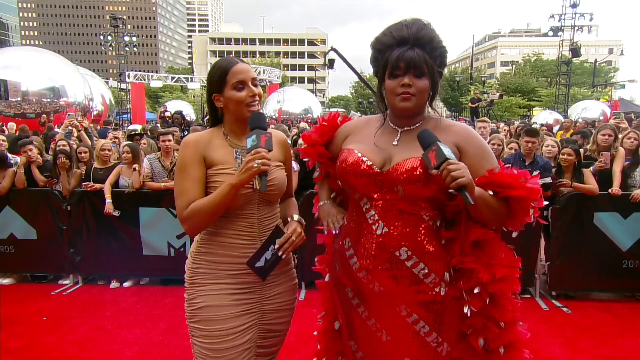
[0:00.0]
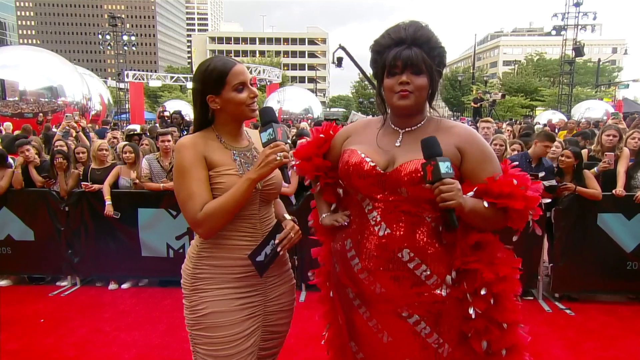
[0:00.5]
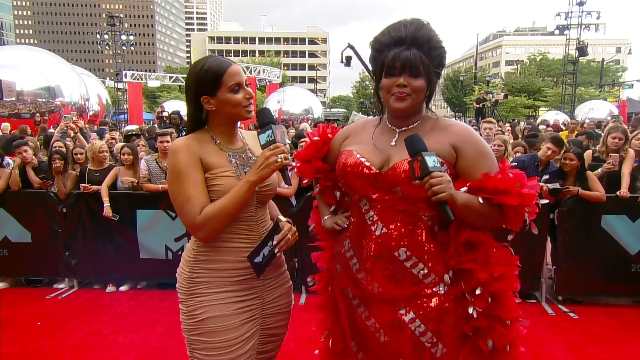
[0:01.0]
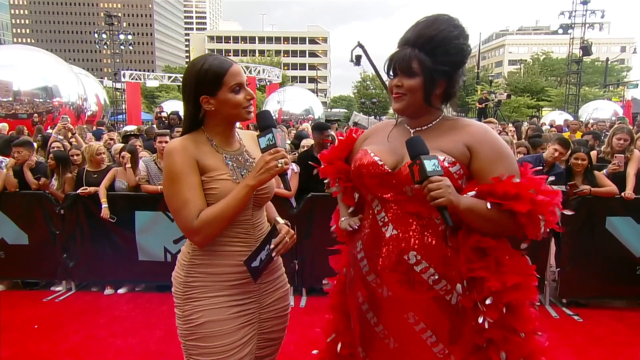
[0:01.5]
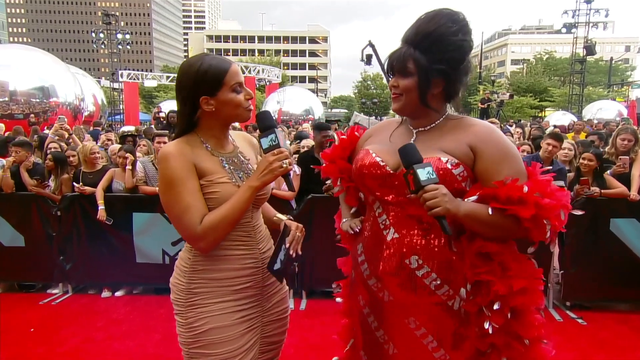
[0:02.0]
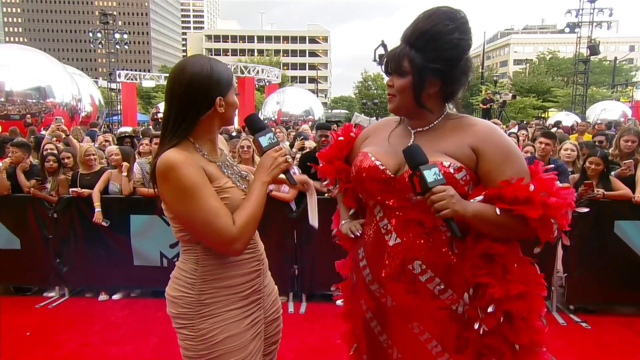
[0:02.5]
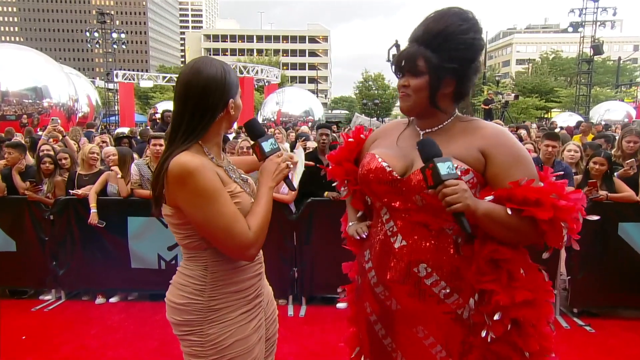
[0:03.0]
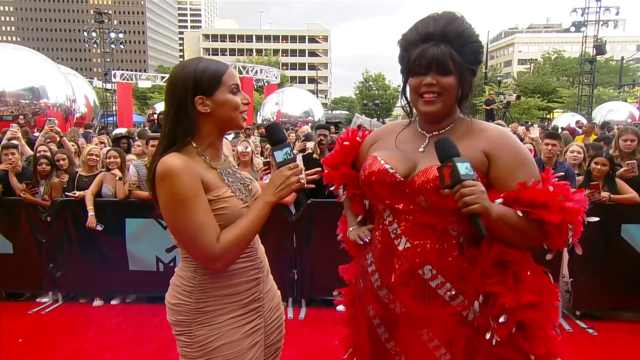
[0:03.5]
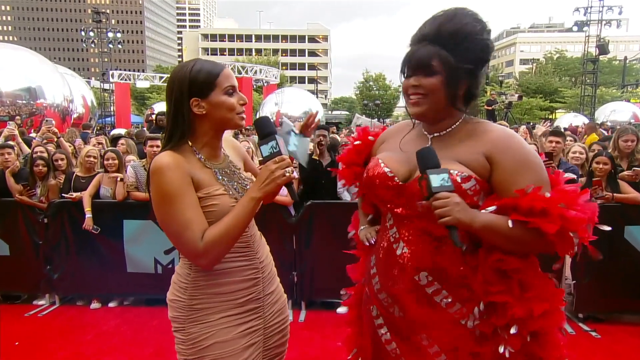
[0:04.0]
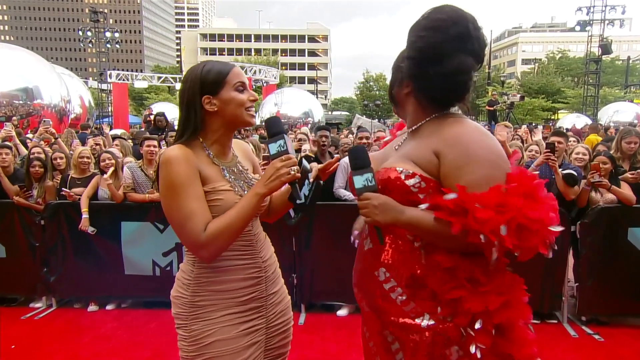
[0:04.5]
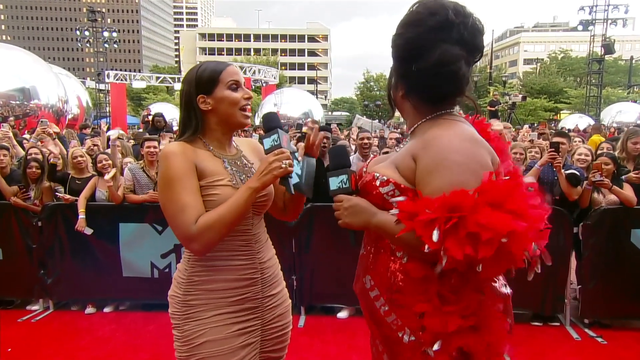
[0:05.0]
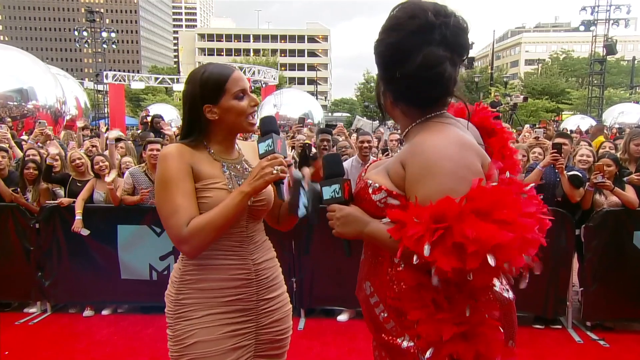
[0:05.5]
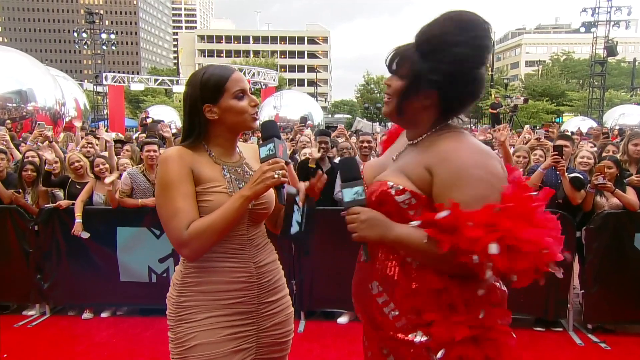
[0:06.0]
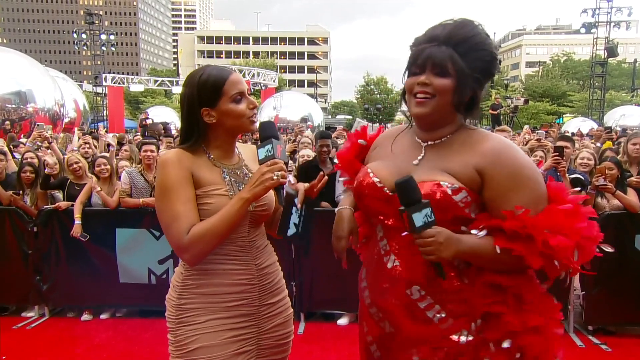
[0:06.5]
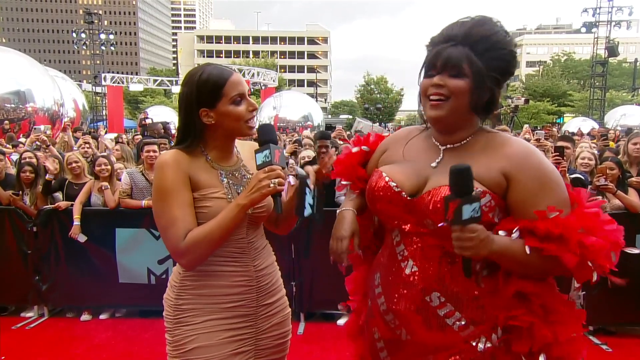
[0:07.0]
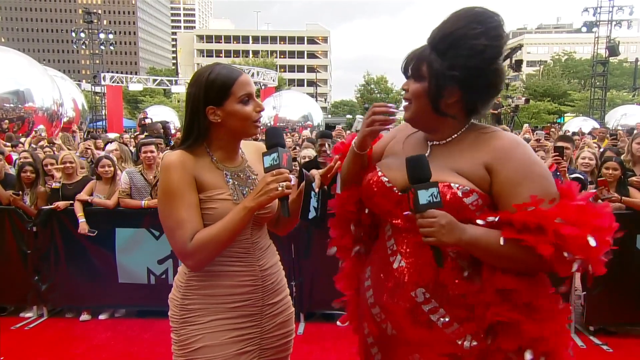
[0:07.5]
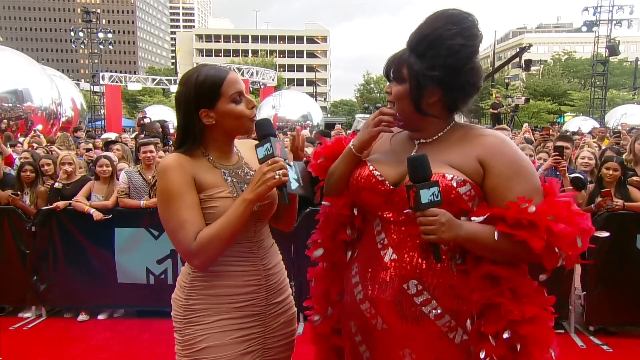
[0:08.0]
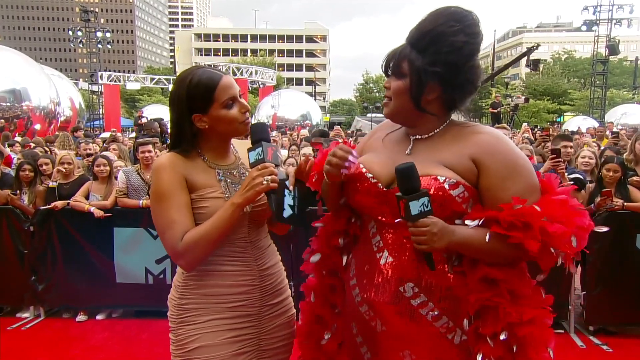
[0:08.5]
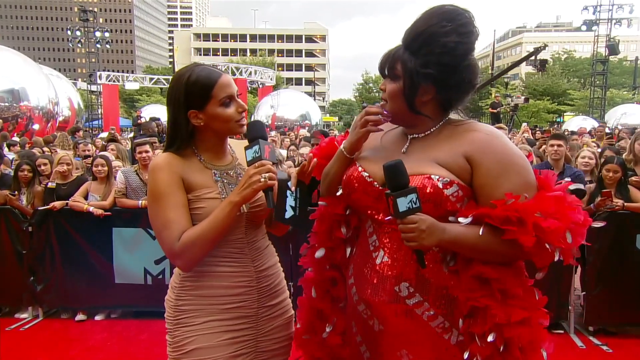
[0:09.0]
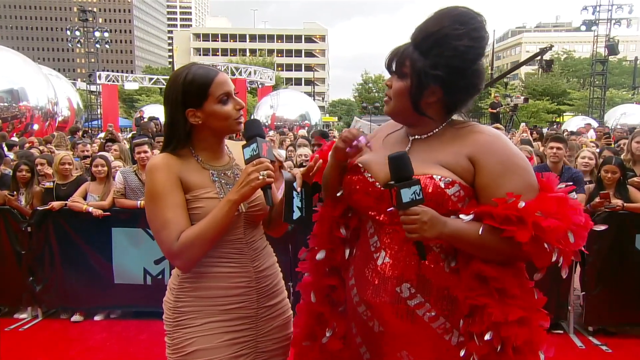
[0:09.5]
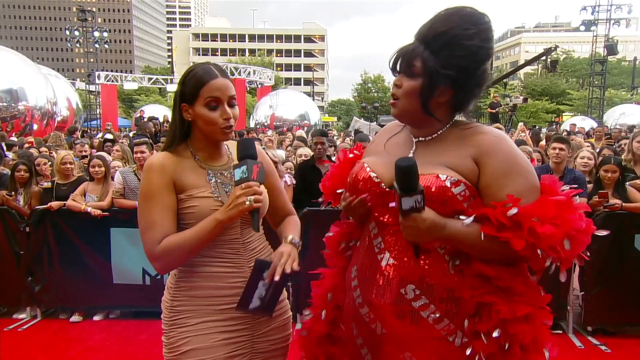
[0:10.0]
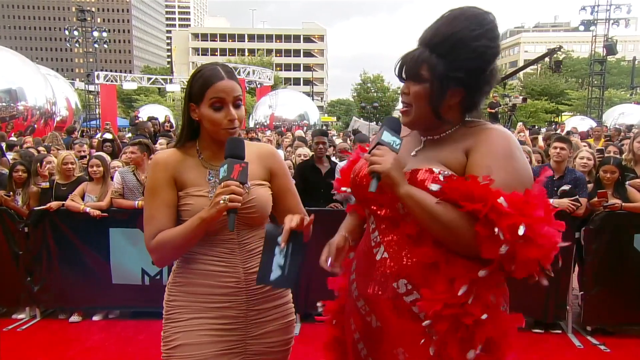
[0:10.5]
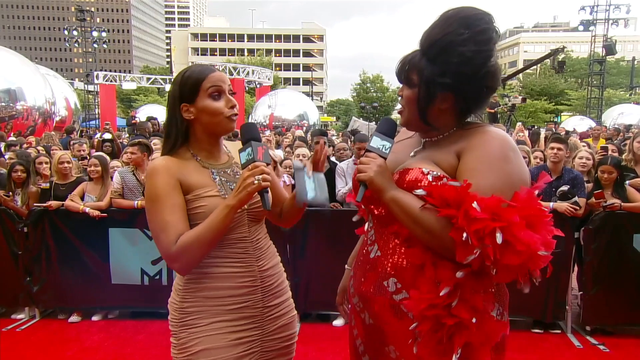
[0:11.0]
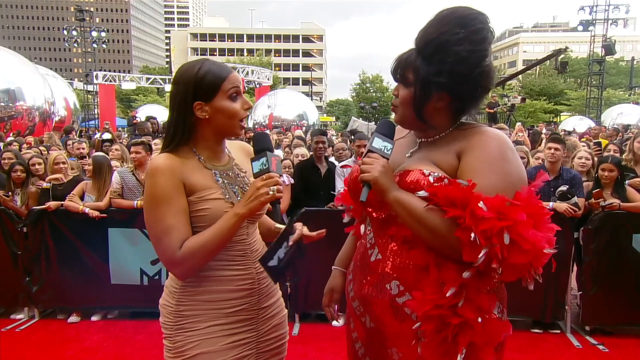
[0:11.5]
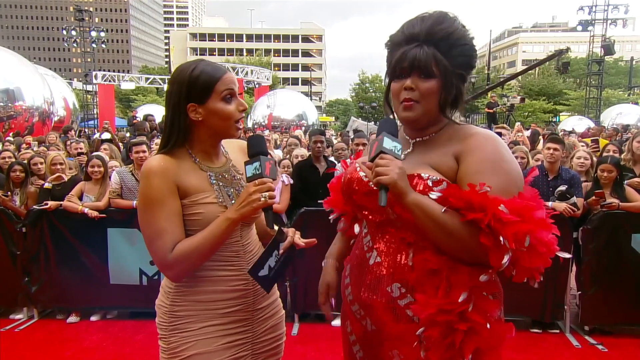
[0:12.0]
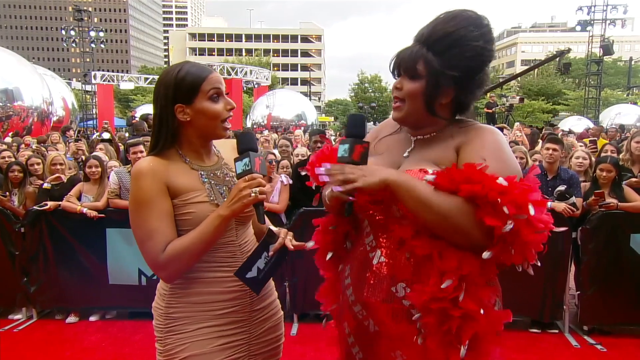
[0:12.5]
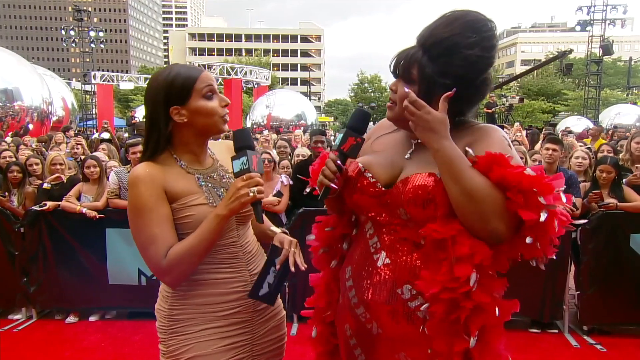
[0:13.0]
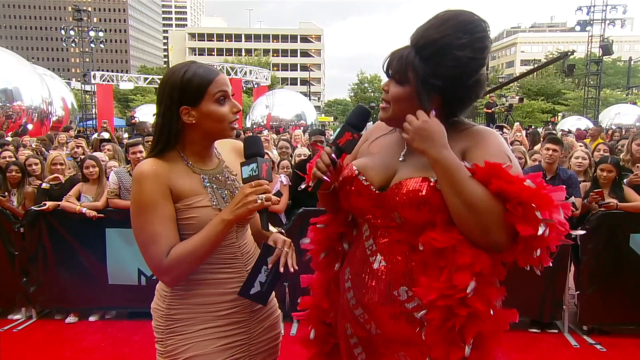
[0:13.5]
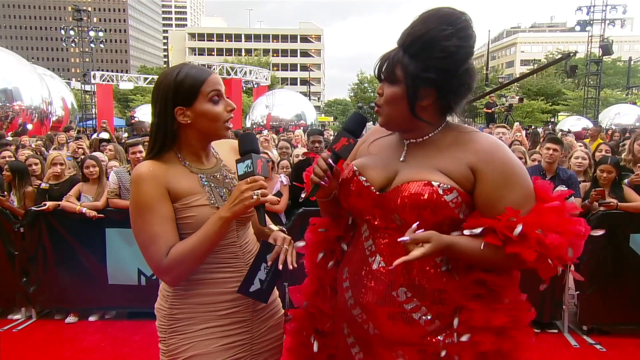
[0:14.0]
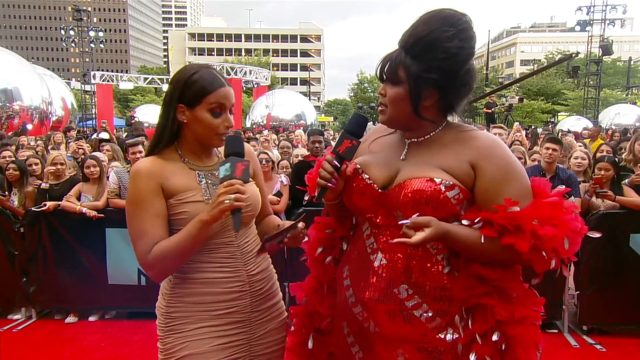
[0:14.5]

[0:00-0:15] An MTV logo appears on the video as a woman from MTV on the red carpet appears to be interviewing the singer Lizzo. The interviewer wears a beige bodycon dress with some ruching. Lizzo wears a strapless, sequined dress with some writing on it that cannot quite be made out, along with a red boa, and her hair is done in a large beehive updo. A huge crowd of people at the barrier fencing takes pictures with their cameras, waving and screaming, and they seem to be yelling at Lizzo, since she turns back, kind of waves at them and smiles. It is a little windy, and she brushes away a few front pieces of her hair that hang down around her face. She talks very animatedly with the woman interviewing her.